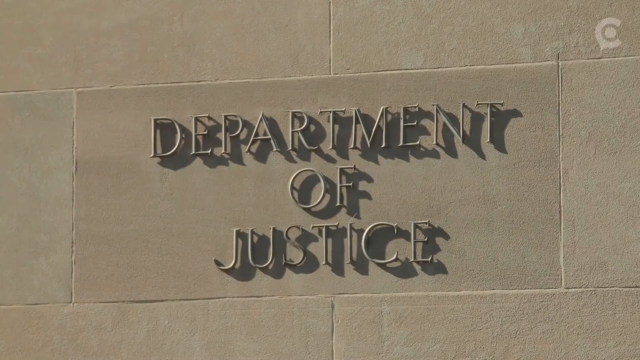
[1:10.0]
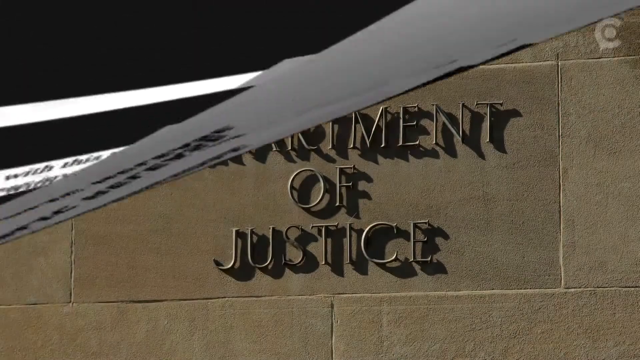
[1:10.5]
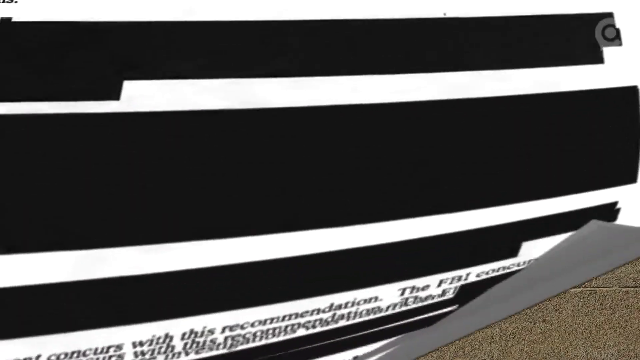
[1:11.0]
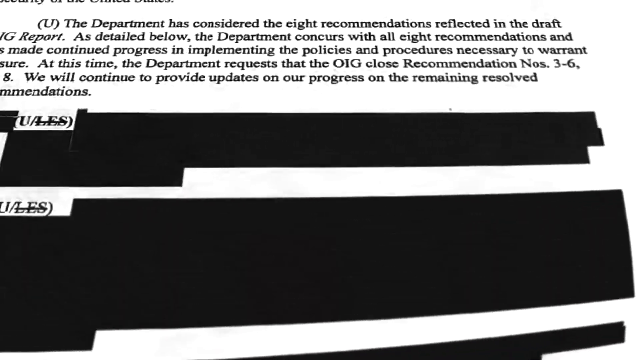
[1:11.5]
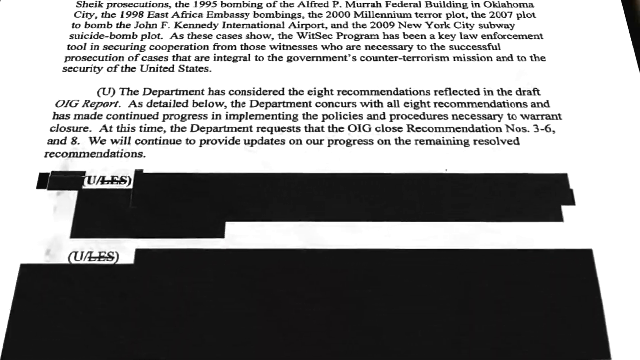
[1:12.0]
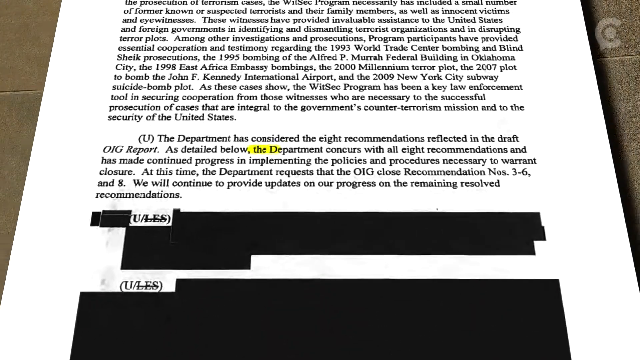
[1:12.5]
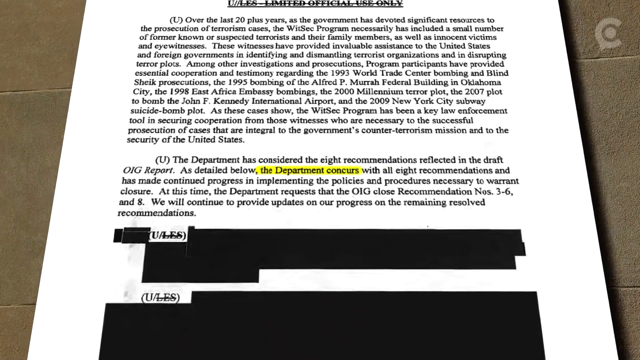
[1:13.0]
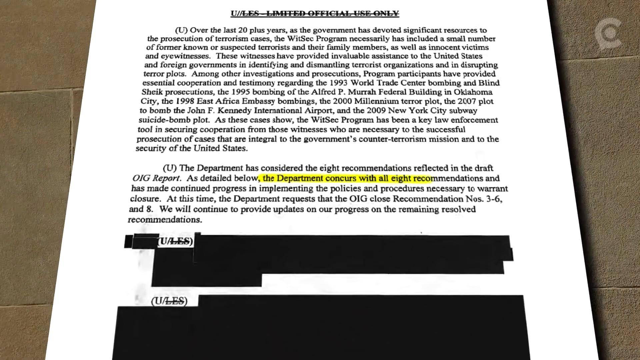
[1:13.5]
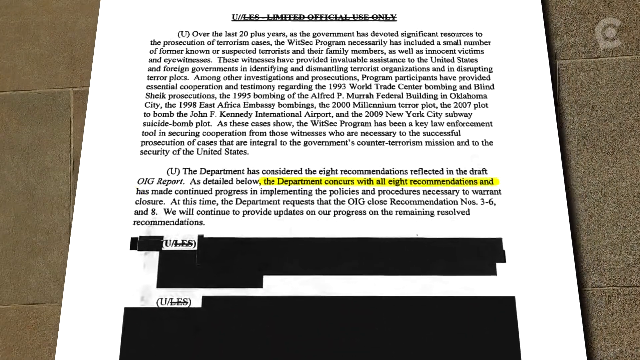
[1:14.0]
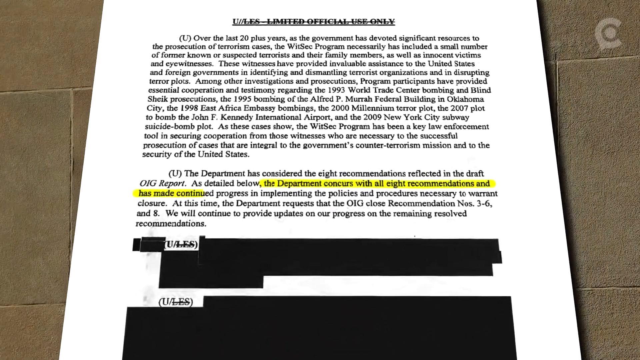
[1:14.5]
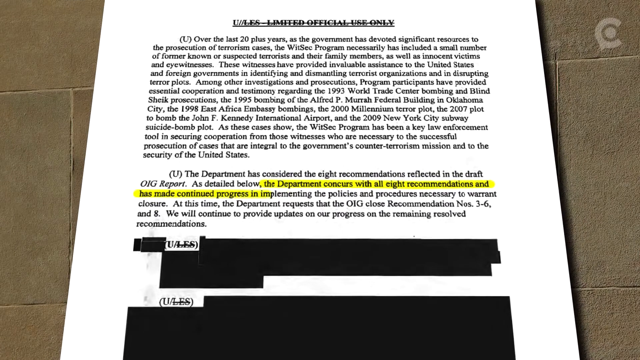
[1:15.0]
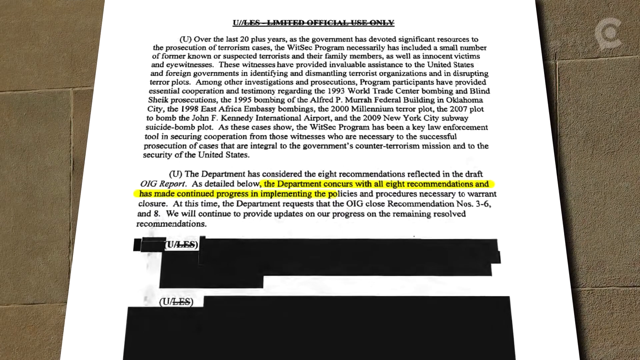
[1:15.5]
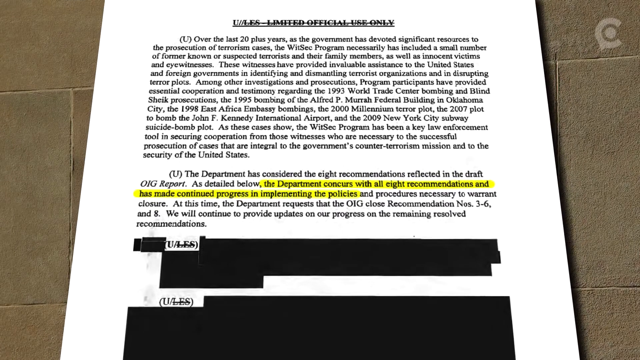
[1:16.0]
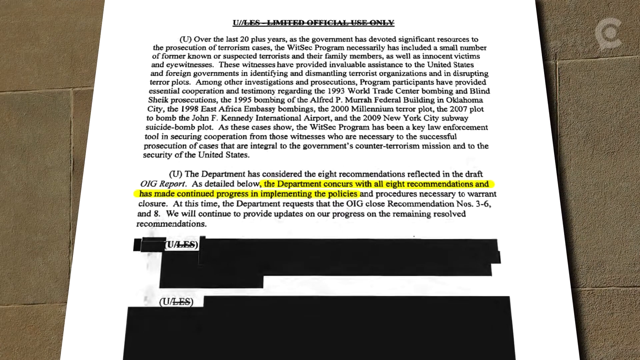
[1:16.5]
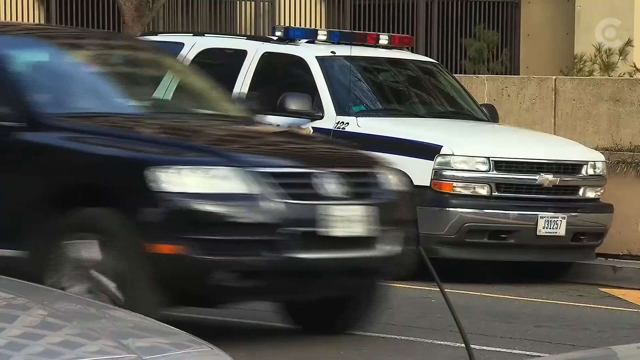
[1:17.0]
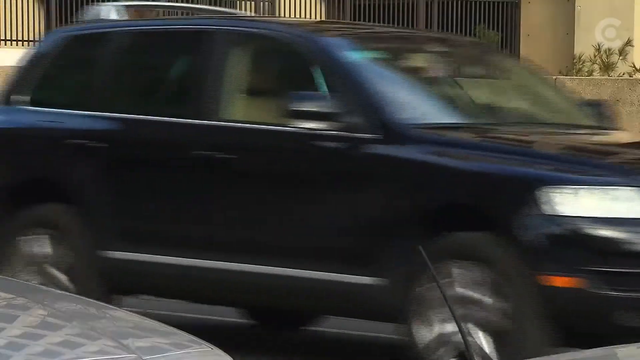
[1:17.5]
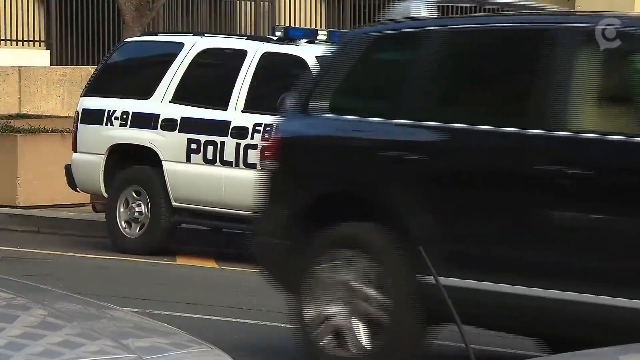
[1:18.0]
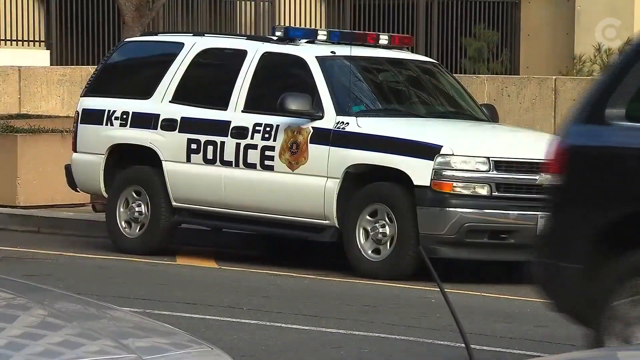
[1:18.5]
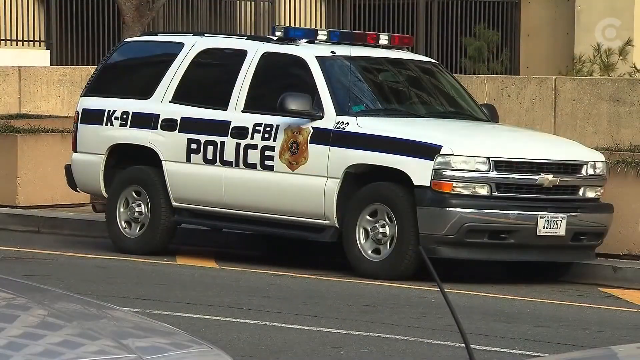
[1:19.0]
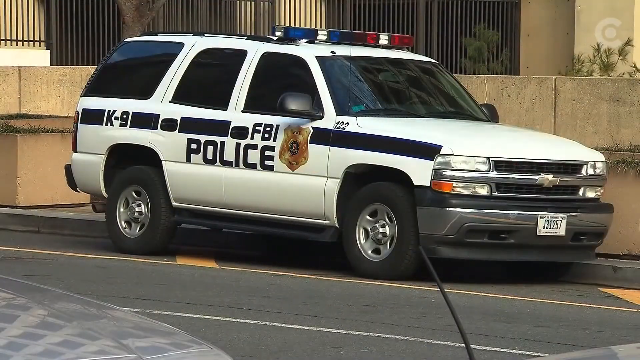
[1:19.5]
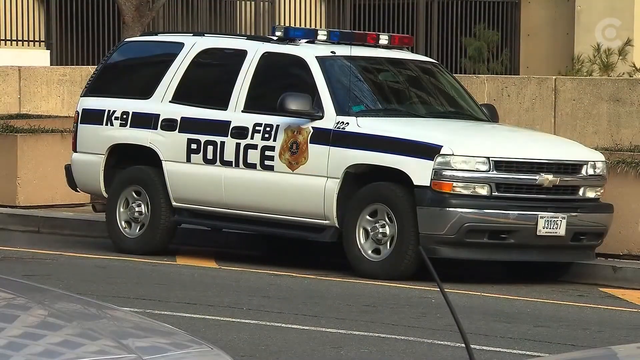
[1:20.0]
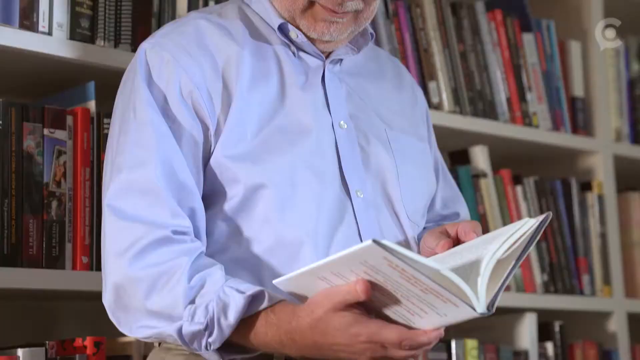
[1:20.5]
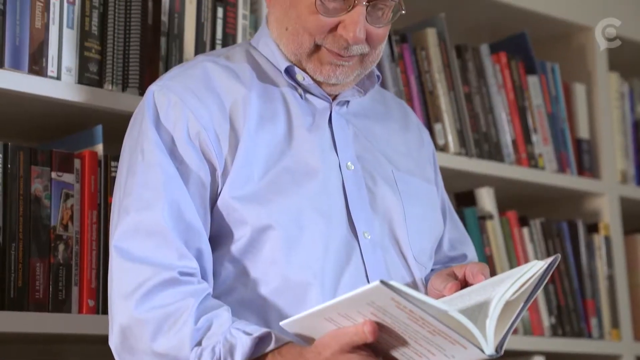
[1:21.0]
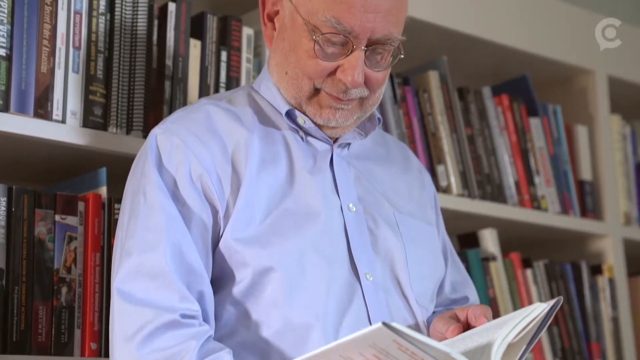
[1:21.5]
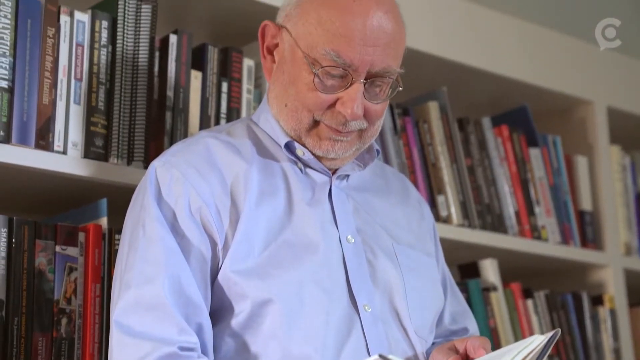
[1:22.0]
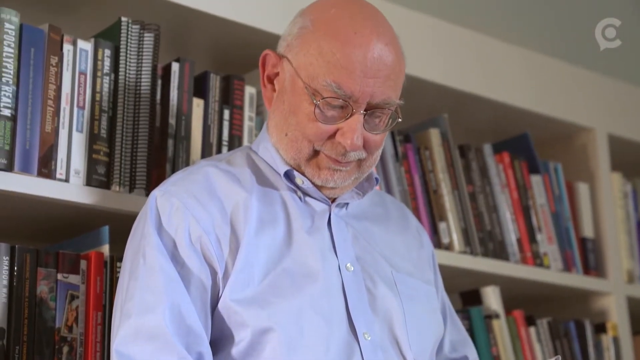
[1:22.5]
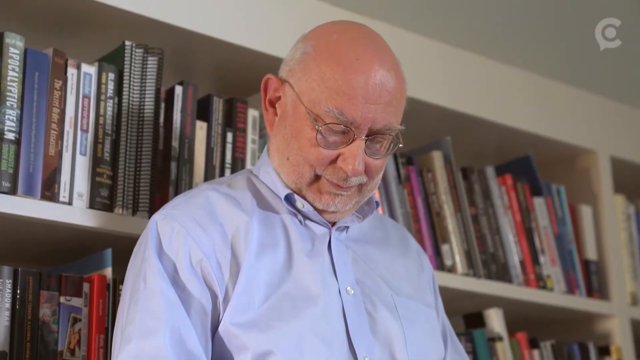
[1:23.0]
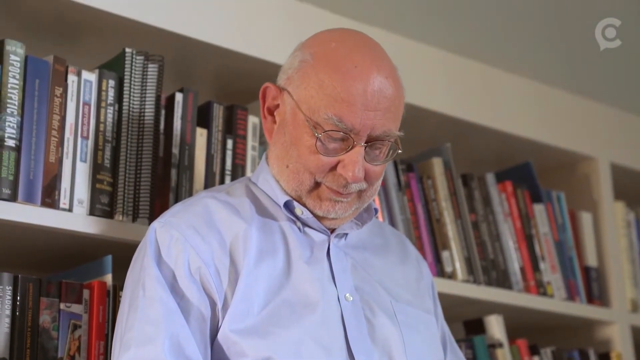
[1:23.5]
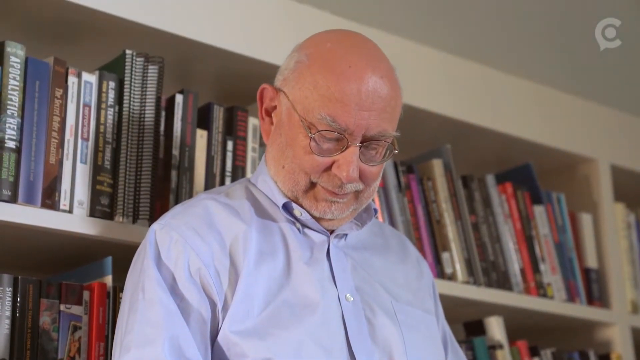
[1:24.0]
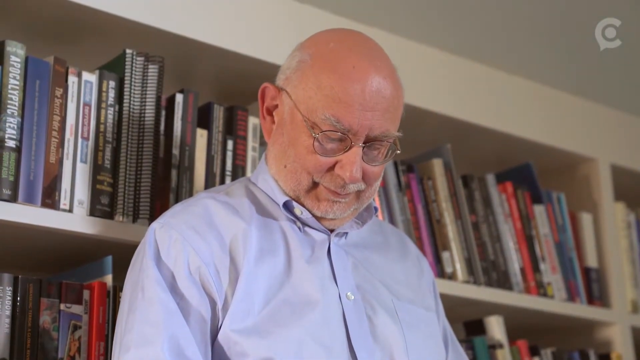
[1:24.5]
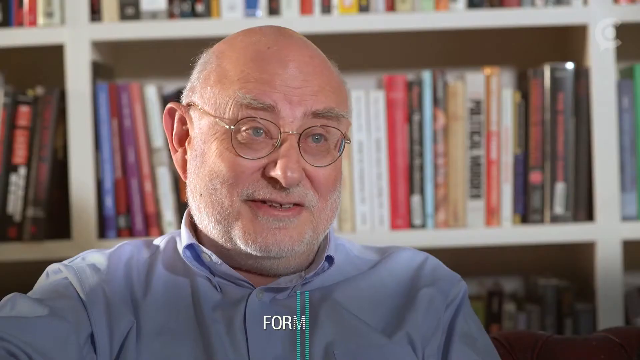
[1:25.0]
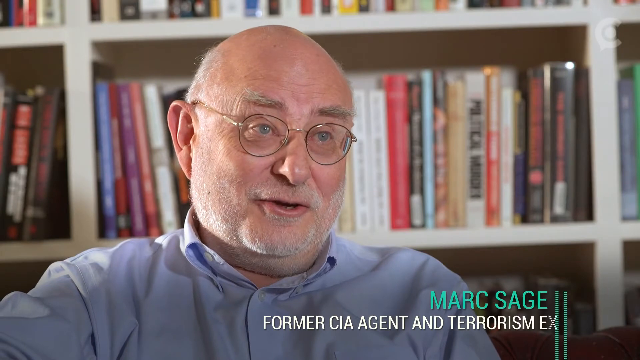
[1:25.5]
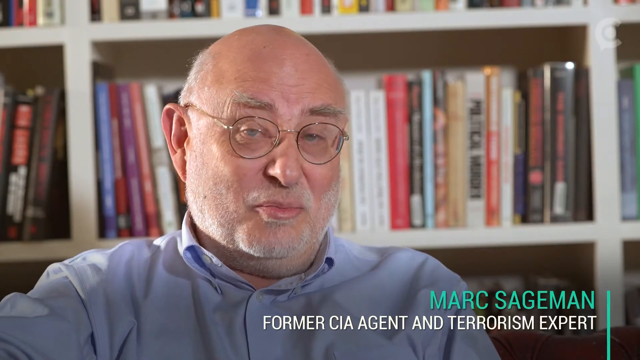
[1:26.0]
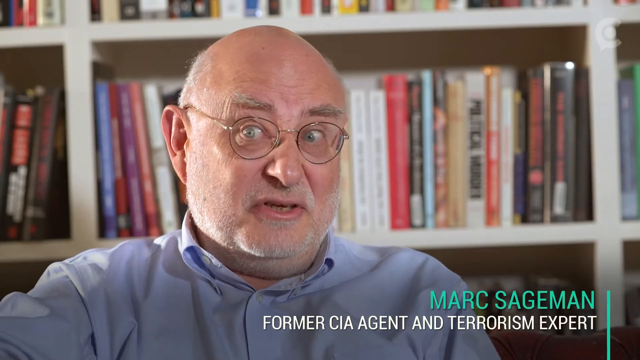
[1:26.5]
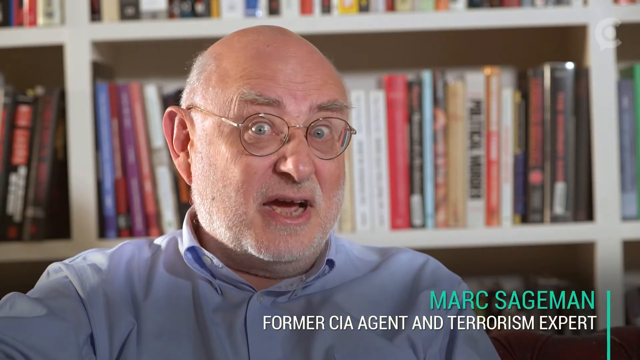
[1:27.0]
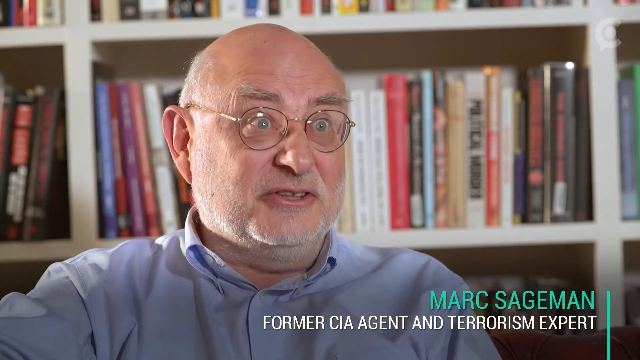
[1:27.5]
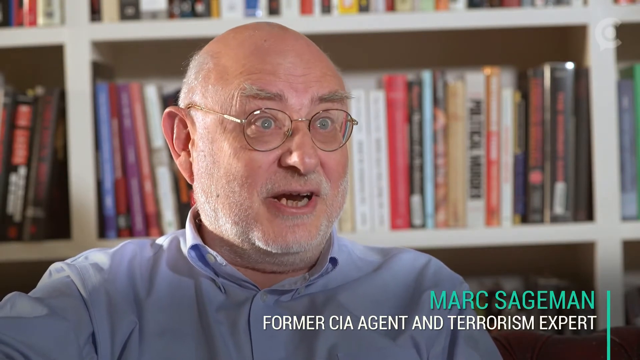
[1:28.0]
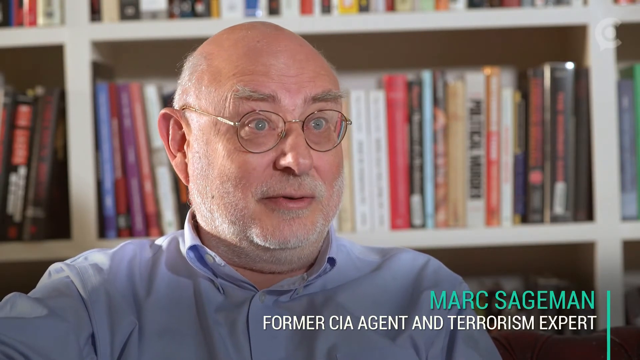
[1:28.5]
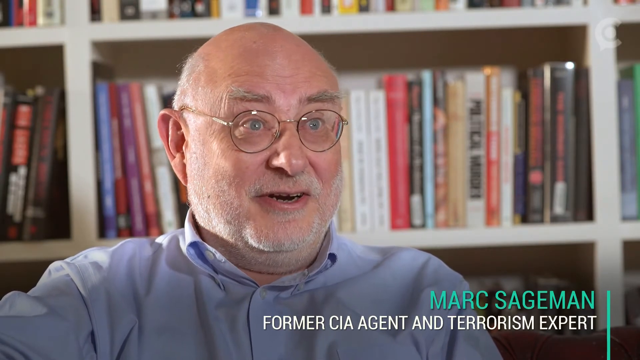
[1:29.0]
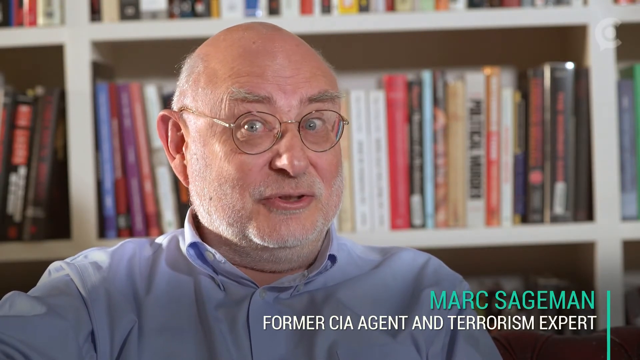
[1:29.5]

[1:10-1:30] The side of the Department of Justice building is shown, with "Department of Justice" written on the stone wall. The screen transitions to a digital document, a white page with black text and many sentences blackened out, set against the concrete brick wall seen earlier. Next, a white Chevy van with police lights is parked beside the building, and another van passes it. Written in black on the side of the van's door is "FBI police," and the FBI shield is also visible. Then a man stands with his back to a bookshelf. He is bald, with a slight gray mustache and a cropped gray beard, and wears round wire-framed eyeglasses and a pastel sky blue shirt buttoned almost to the collar. His head is bent down as if reading something, and he moves his head slightly from side to side as if scanning something with his hands. Next, the man speaks while seated with his back to the bookshelf, which holds many books. As he speaks, his pale blue eyes open wide behind his eyeglasses and dart from side to side.